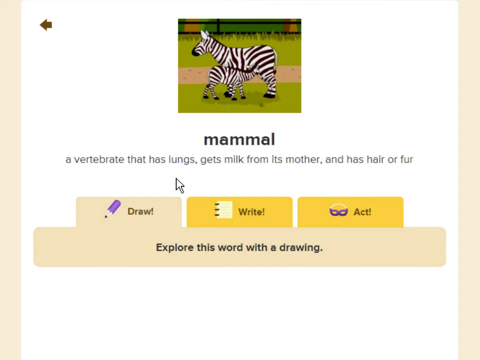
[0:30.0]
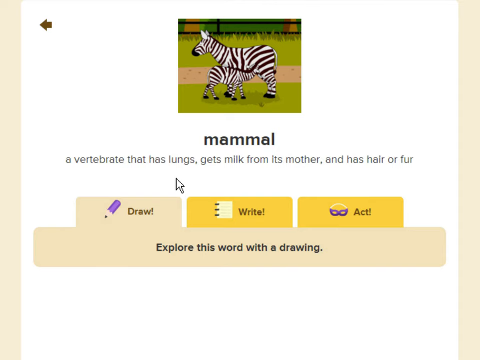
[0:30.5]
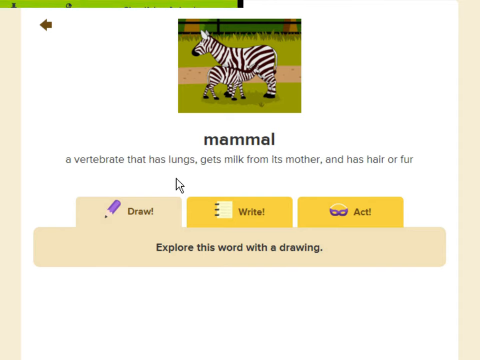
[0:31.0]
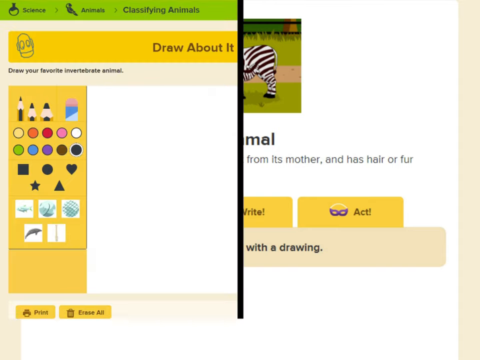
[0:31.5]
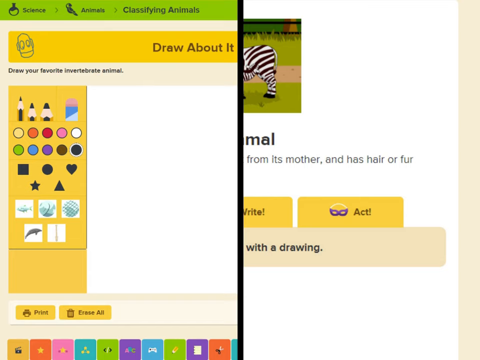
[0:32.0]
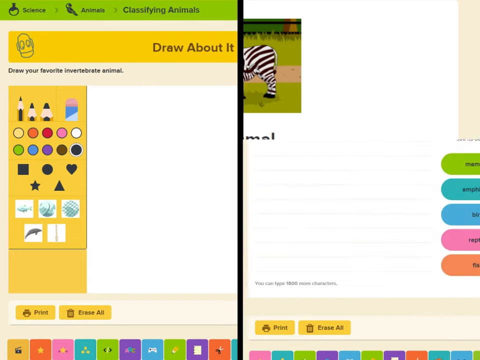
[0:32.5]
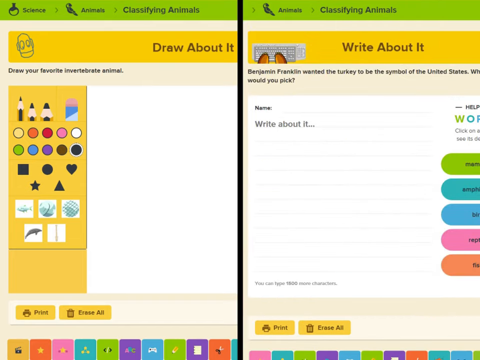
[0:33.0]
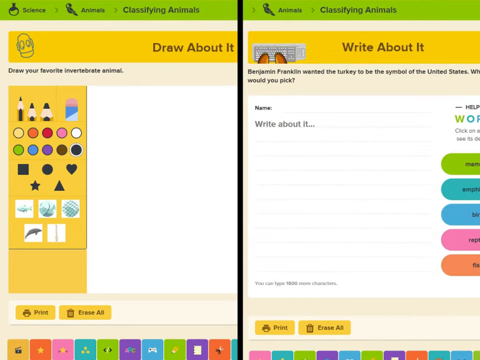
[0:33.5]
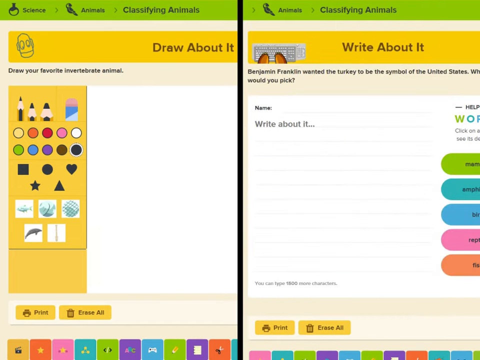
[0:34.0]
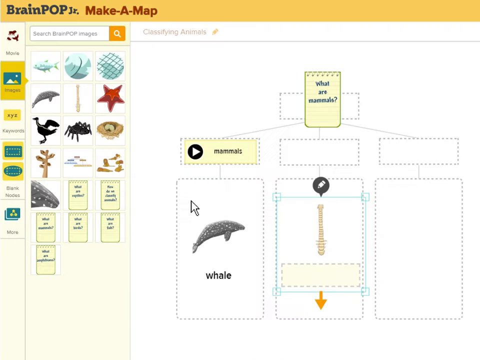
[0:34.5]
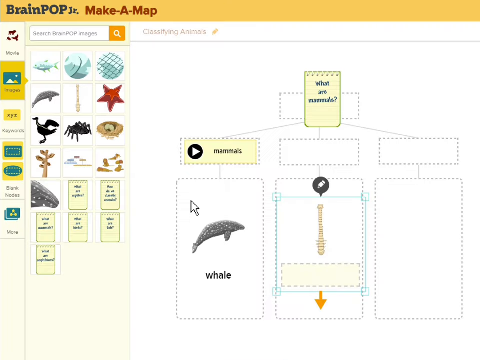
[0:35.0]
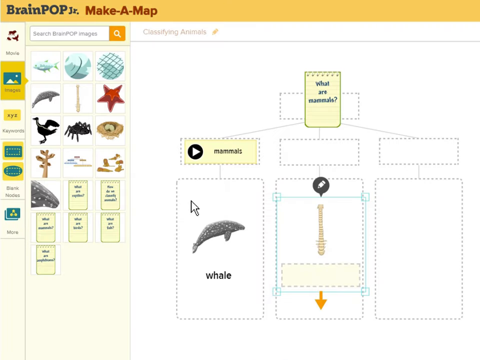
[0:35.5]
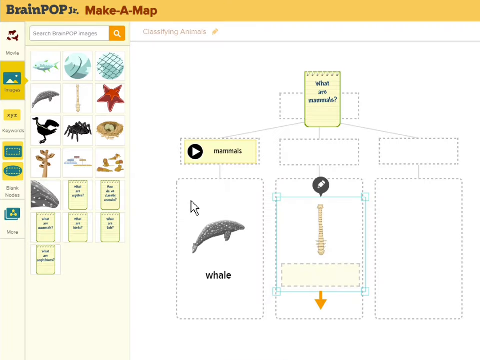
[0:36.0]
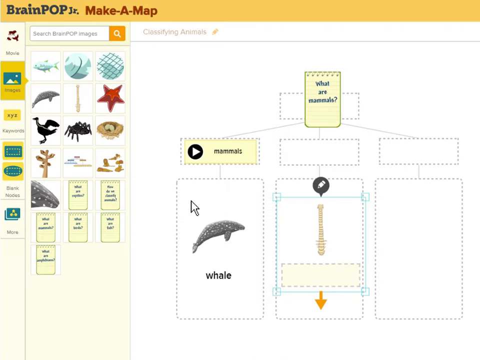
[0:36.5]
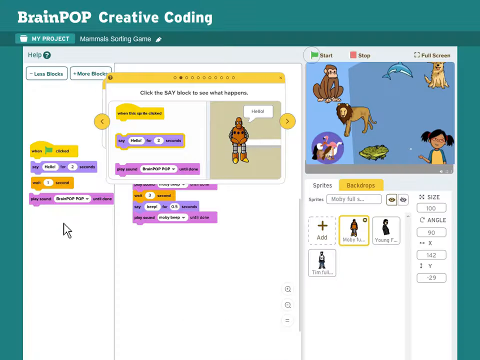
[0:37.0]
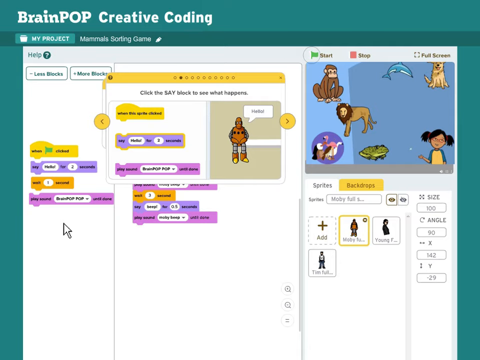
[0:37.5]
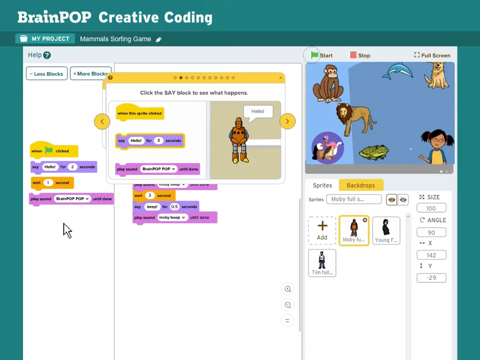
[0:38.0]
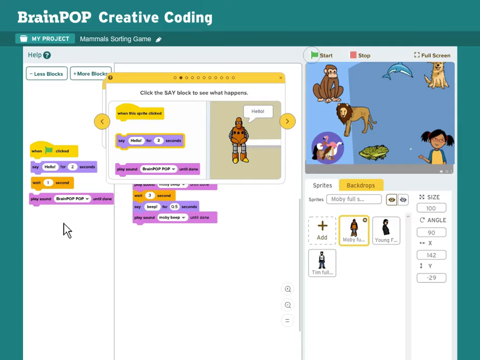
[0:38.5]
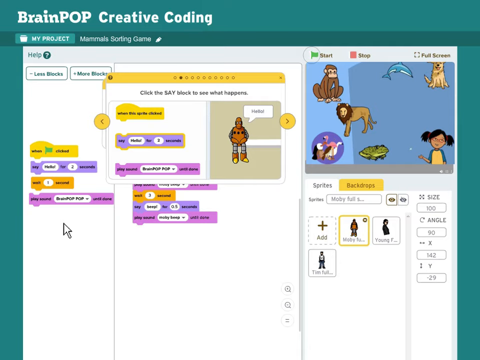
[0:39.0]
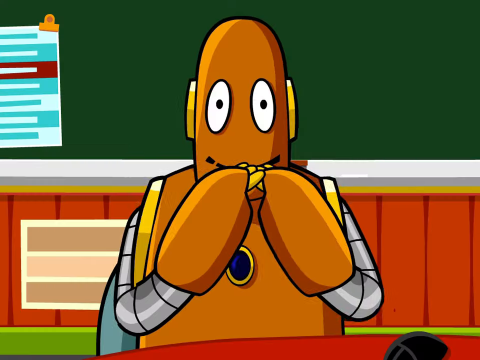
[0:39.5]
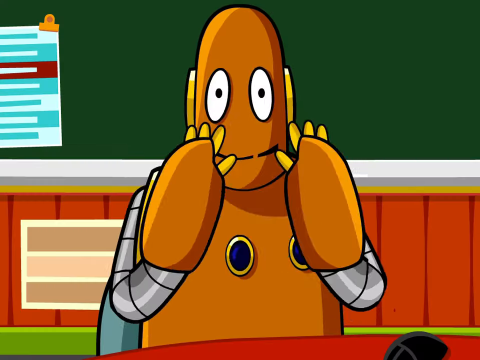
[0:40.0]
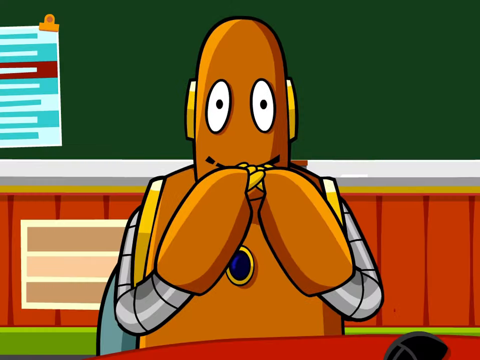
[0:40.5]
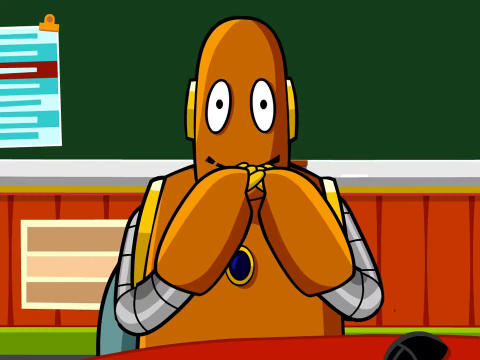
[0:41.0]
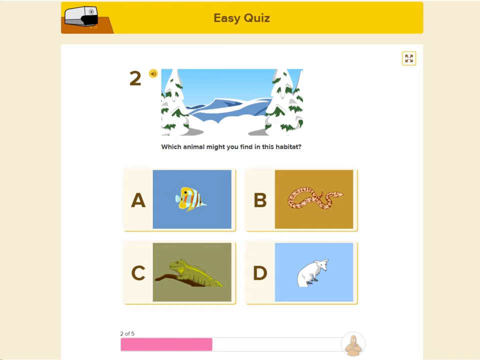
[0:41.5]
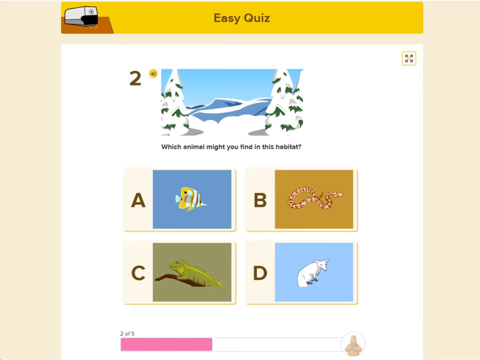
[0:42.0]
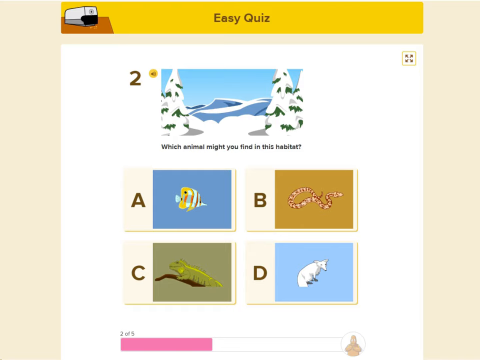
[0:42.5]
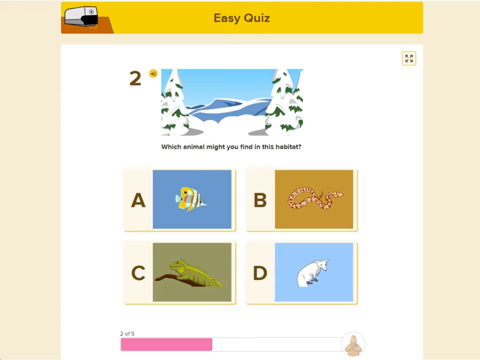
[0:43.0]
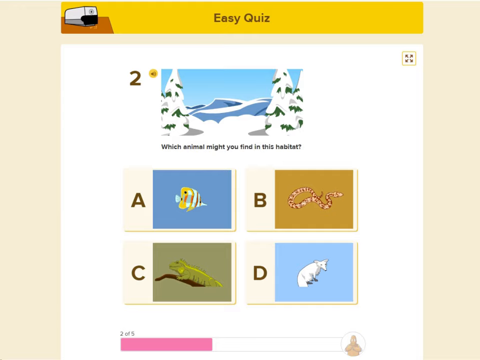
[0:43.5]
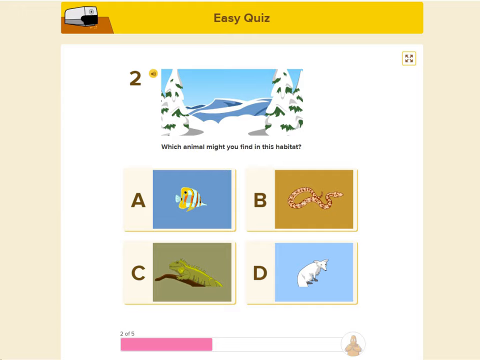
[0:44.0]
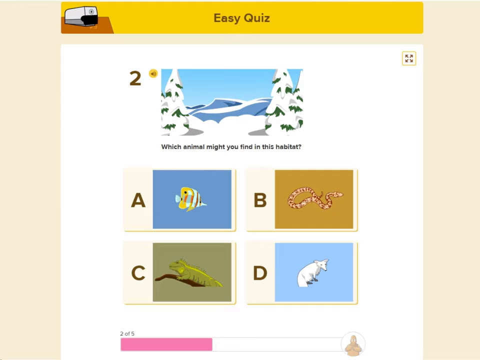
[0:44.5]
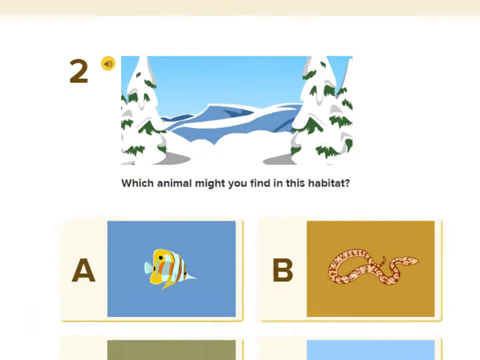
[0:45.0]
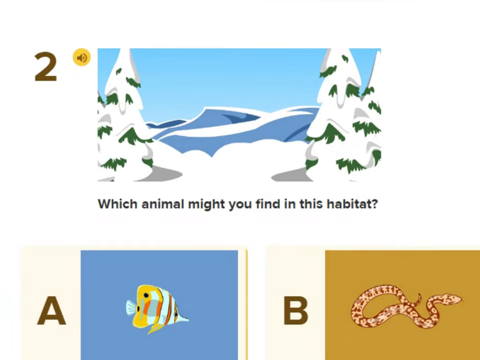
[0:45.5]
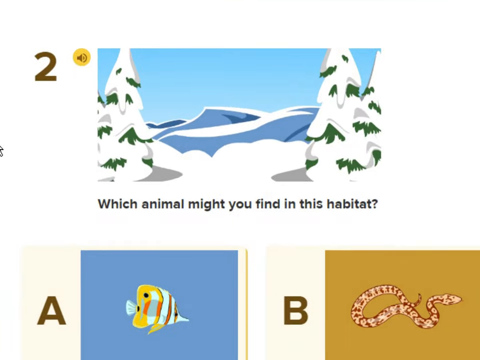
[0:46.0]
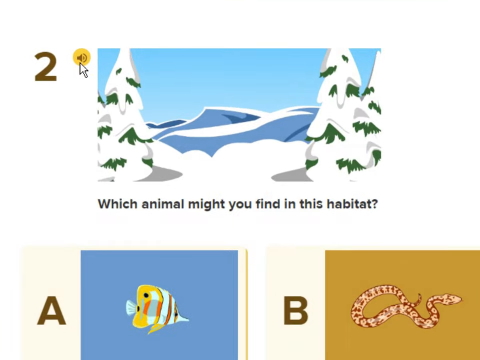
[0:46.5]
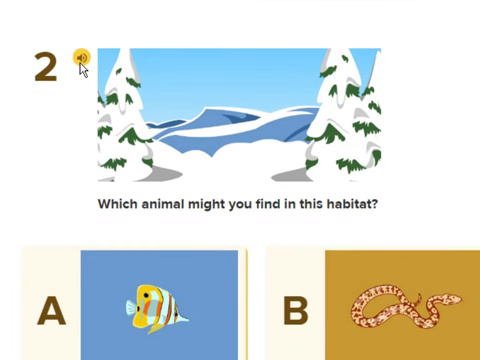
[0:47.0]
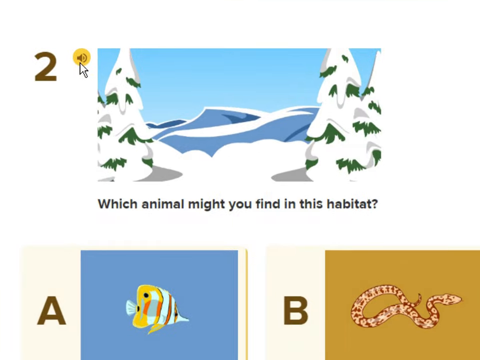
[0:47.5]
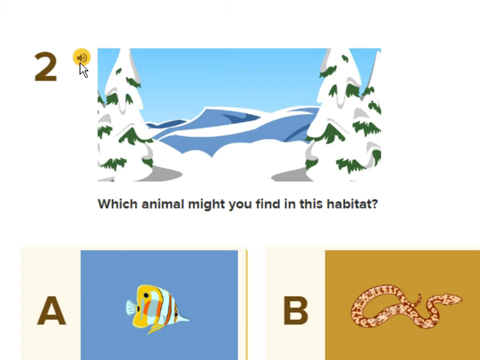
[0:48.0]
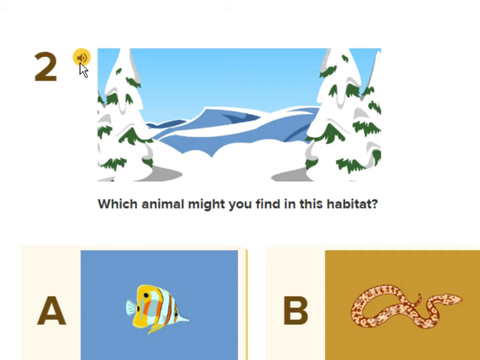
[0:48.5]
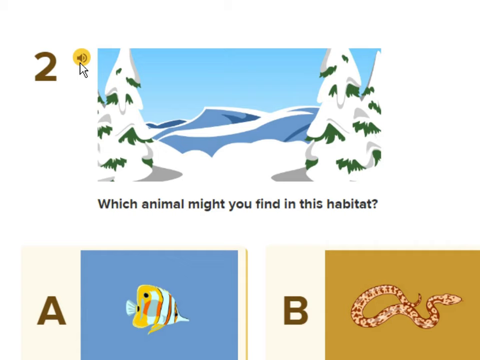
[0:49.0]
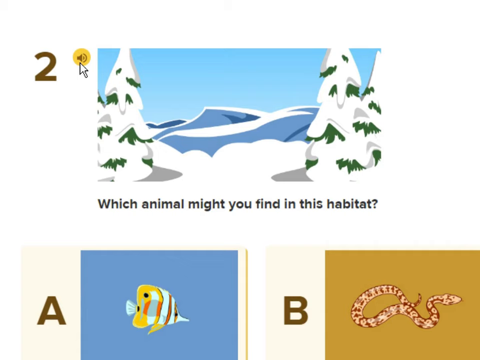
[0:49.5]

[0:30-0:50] The screen reads "mammal, a vertebrae that has lungs, gets milk from its mother, and has hair or fur," with options to draw, write, or act. Text says "explore this word with a drawing," and a drawing area appears with different colors and different tools. There is also a place to write, with "your name" and "write about it," and what looks like words and help on the side. Next comes "BrainPop Jr. Make a Map," with "what are mammals" and a picture that can be mapped out, followed by "BrainPop Creative Coding," showing different areas for coding. The robot is very happy: his little lights blink and he claps his hands back and forth. Then the text "easy quiz" appears with the question "Which animal might you find in this habitat?" over a snowy habitat, with a snake, an iguana, a fish and an Arctic fox as choices. The view kind of zooms in on the picture, and there is an option to have the question read aloud.